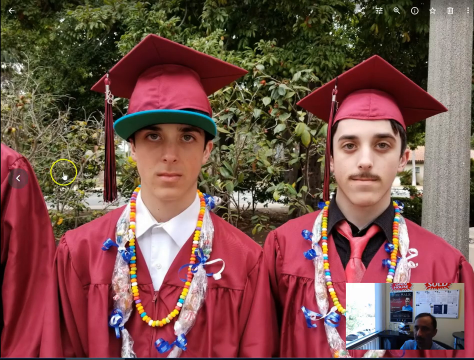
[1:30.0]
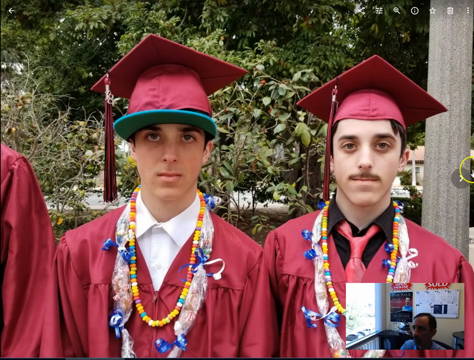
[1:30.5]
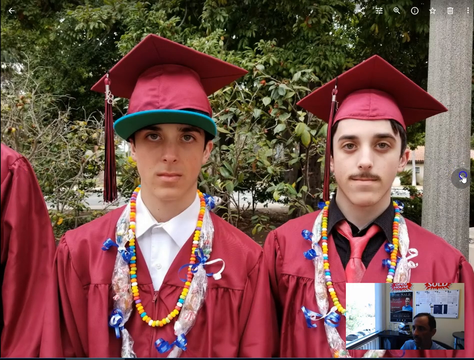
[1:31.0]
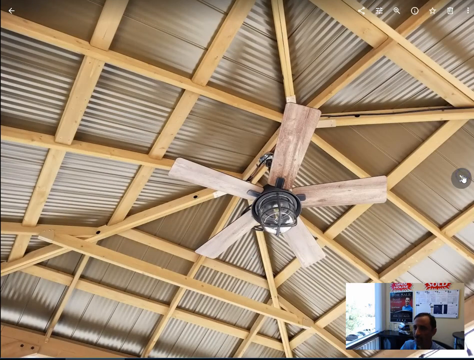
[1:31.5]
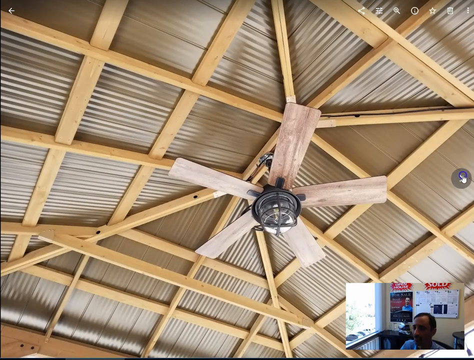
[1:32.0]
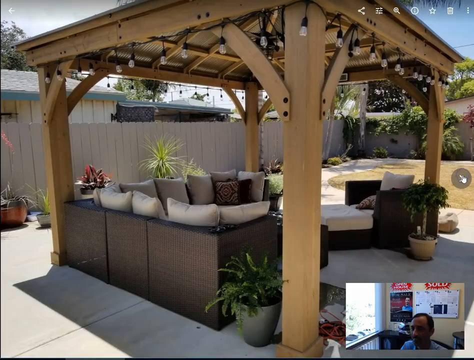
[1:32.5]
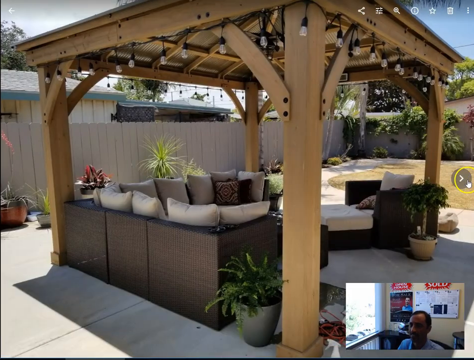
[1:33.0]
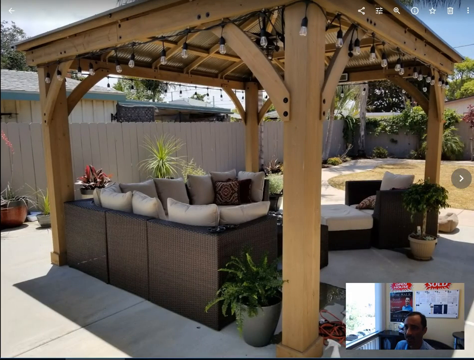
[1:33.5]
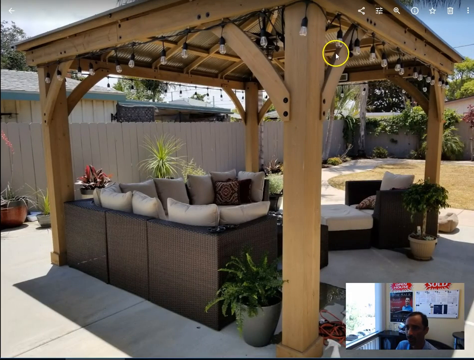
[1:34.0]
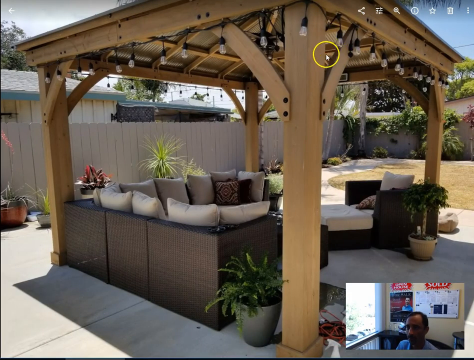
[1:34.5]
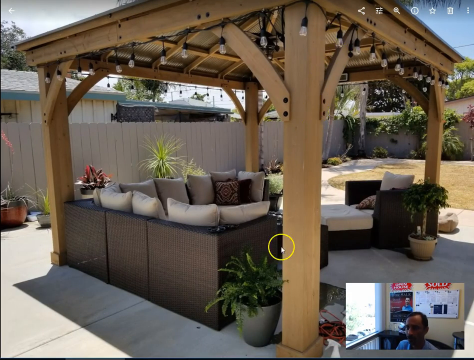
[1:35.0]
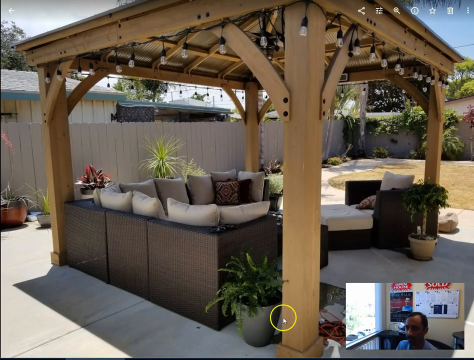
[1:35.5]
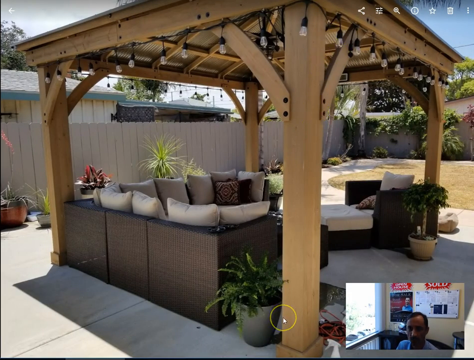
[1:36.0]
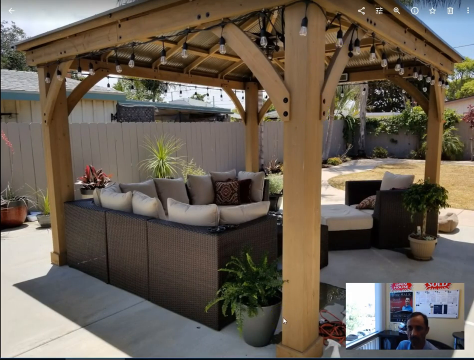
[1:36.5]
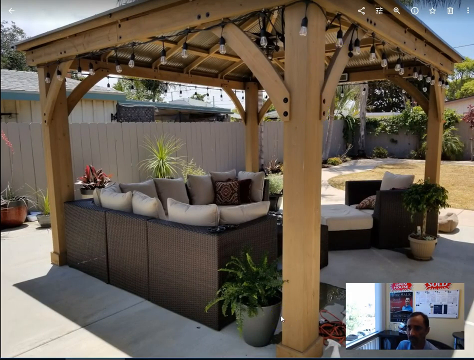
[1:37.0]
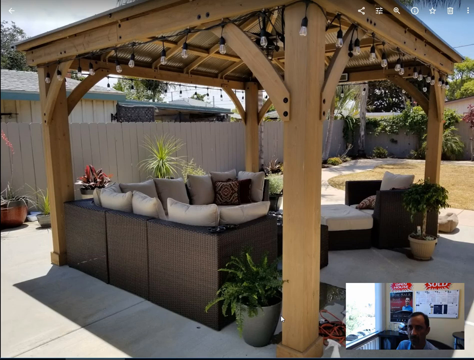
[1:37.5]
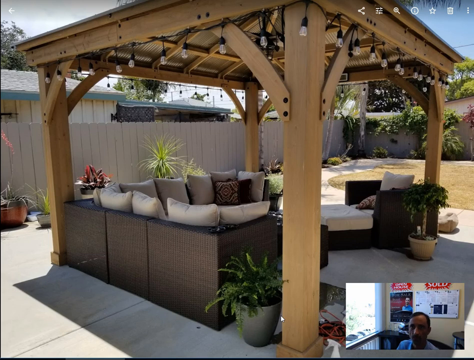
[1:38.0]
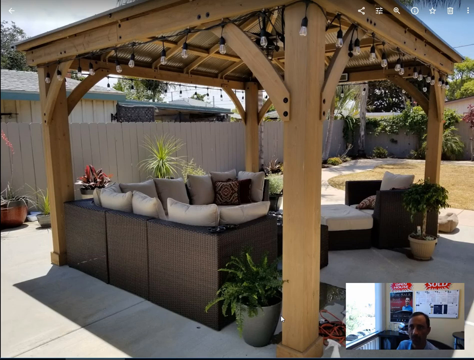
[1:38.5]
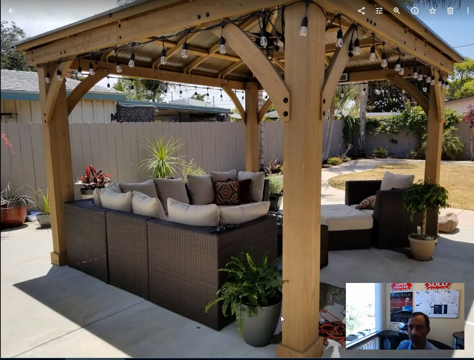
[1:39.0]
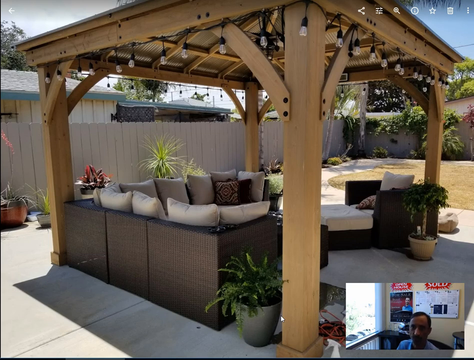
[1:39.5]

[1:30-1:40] A graduation picture shows two men wearing caps and gowns of a burgundy-like color; they are also wearing necklaces. The video cuts to a picture of the ceiling of a gazebo, and the user clicks the right chevron button on the right side of the screen. A side view of the gazebo appears; it seems to be in a backyard. The gazebo is light brown and made of wood, with a bunch of lights around the top. Underneath are outdoor sofas whose frames look like they are made of plastic, in a blackish color, and the backrest pillows look light gray. There are pots on the corners of the gazebo, and a grayish fence is in the background.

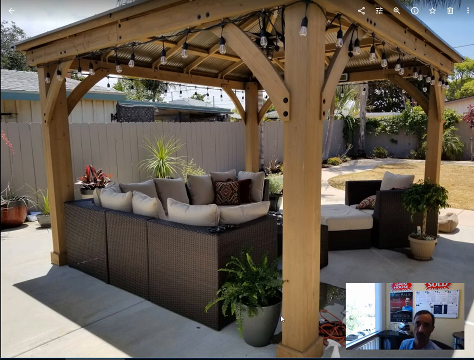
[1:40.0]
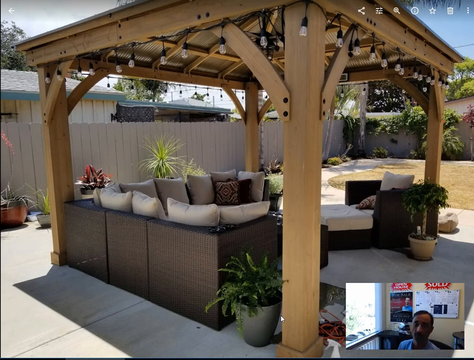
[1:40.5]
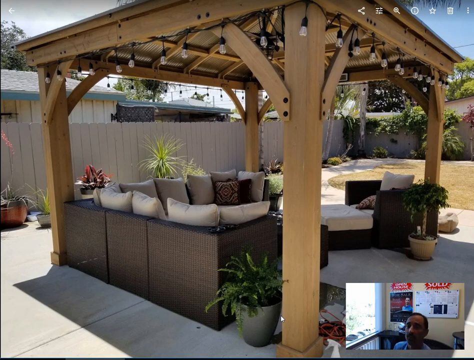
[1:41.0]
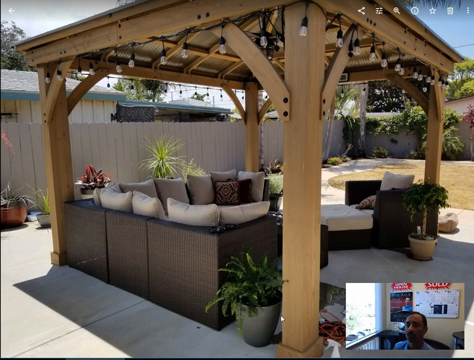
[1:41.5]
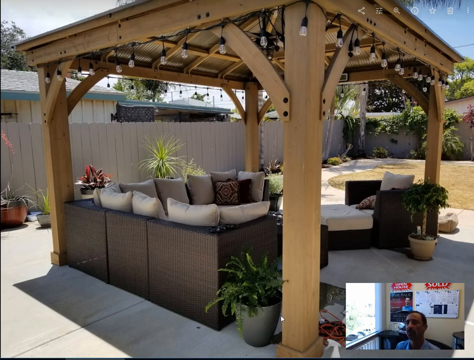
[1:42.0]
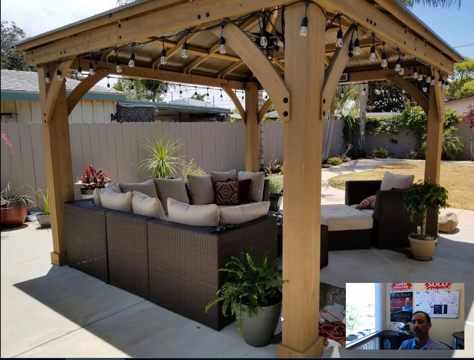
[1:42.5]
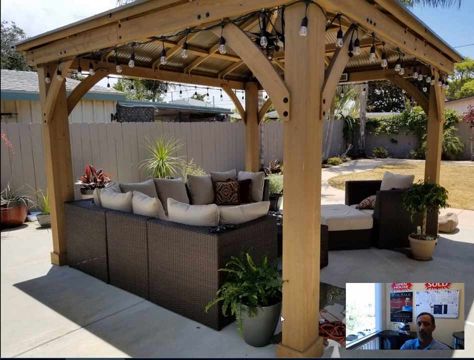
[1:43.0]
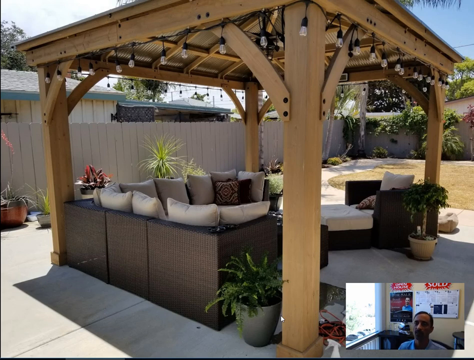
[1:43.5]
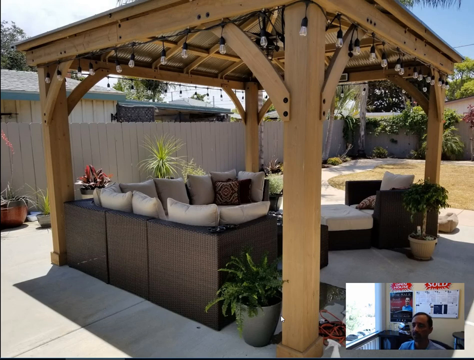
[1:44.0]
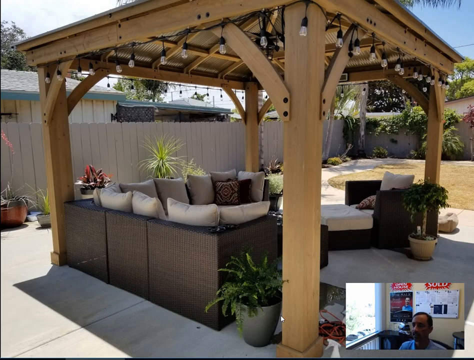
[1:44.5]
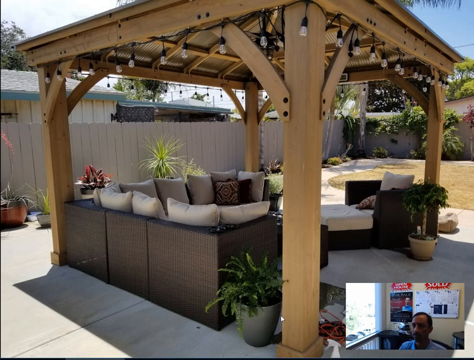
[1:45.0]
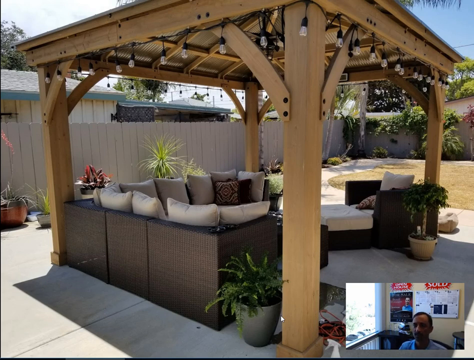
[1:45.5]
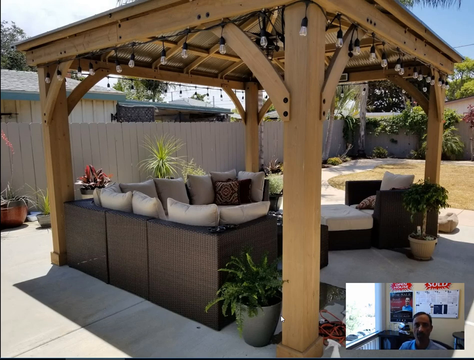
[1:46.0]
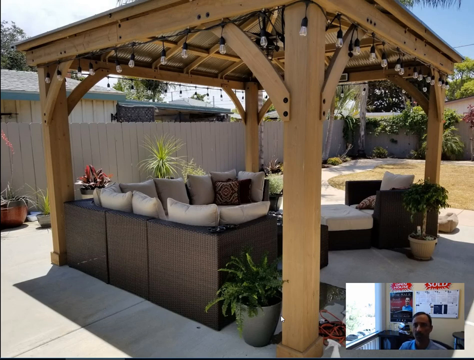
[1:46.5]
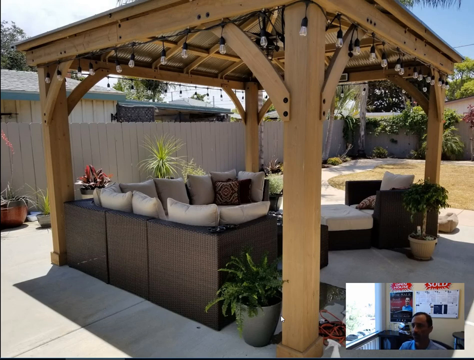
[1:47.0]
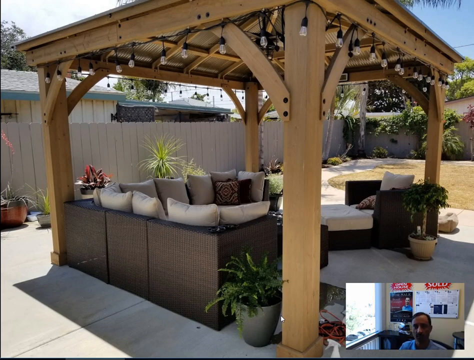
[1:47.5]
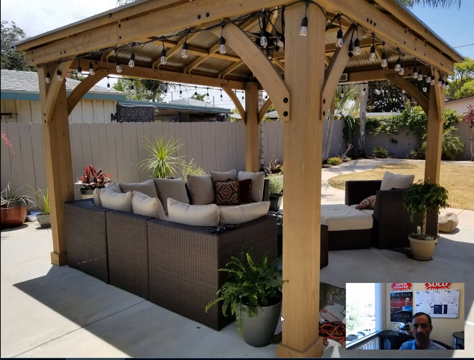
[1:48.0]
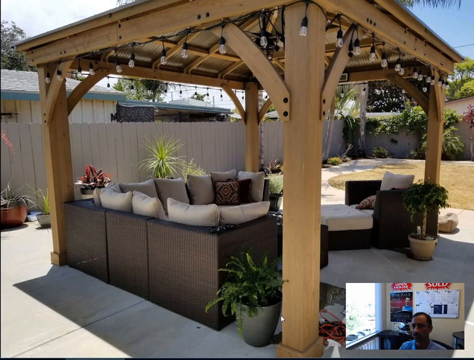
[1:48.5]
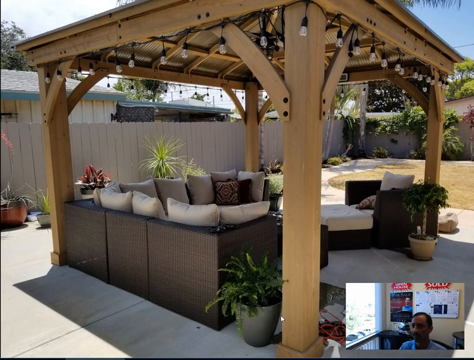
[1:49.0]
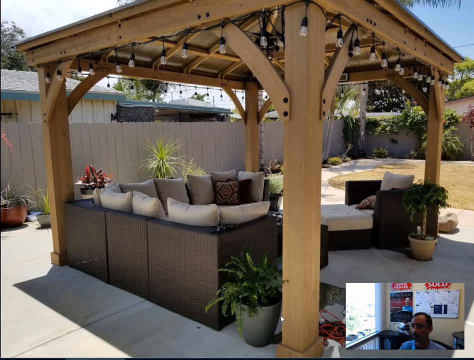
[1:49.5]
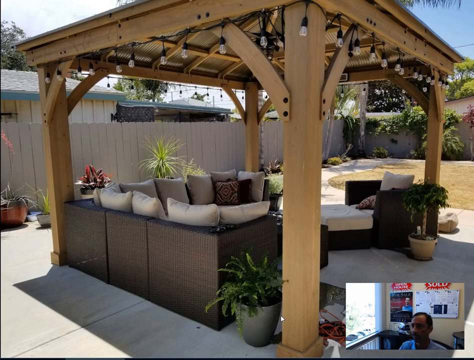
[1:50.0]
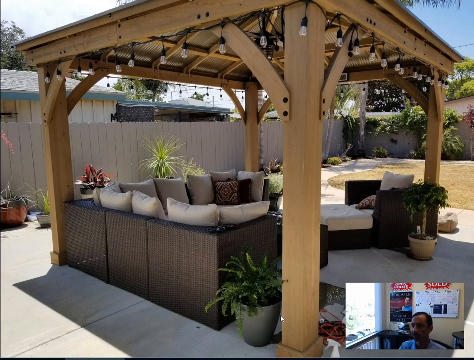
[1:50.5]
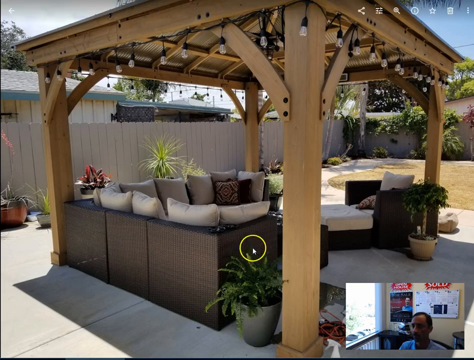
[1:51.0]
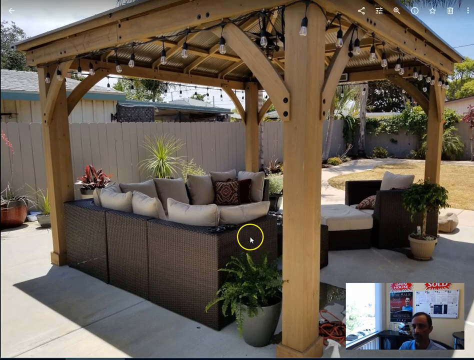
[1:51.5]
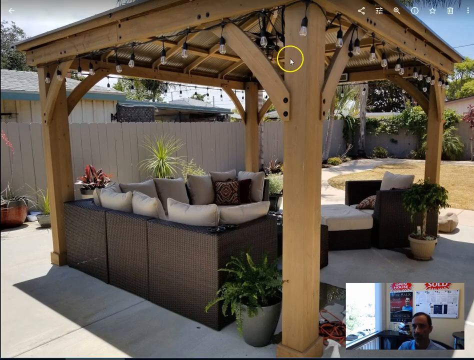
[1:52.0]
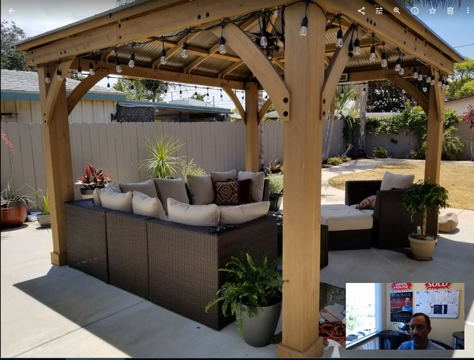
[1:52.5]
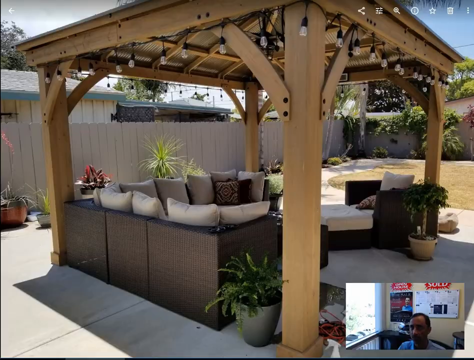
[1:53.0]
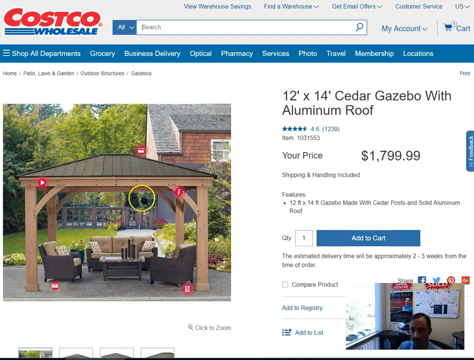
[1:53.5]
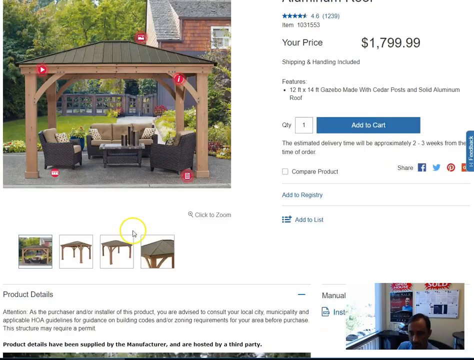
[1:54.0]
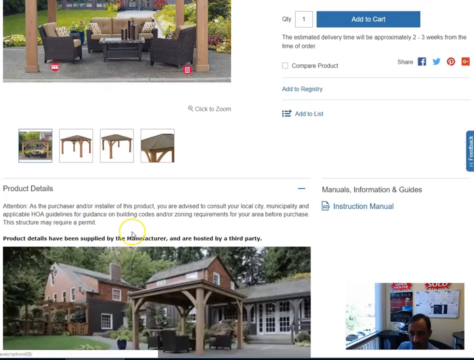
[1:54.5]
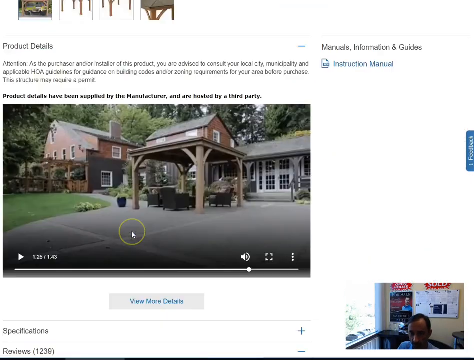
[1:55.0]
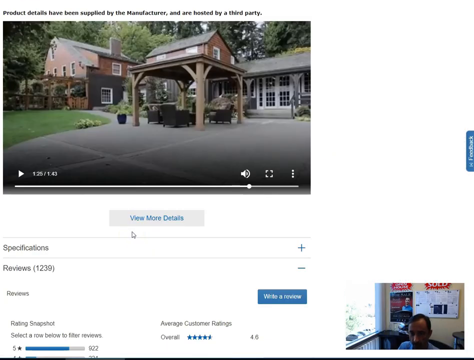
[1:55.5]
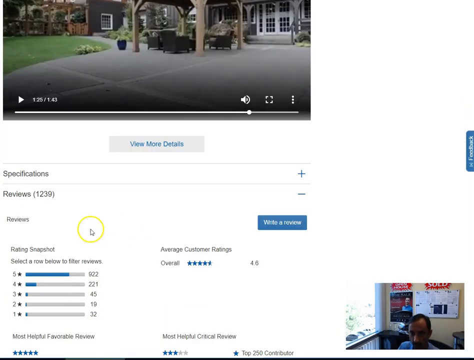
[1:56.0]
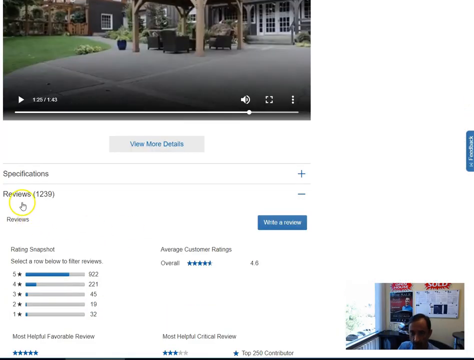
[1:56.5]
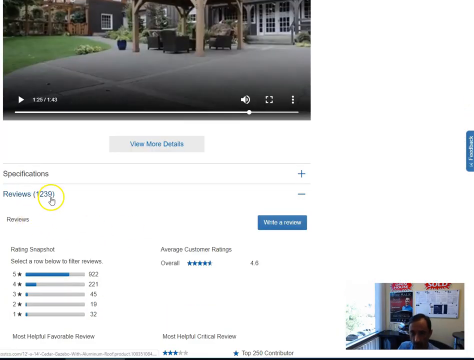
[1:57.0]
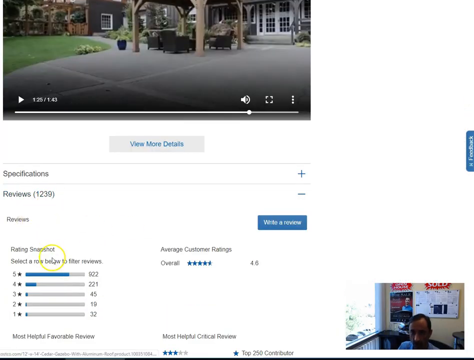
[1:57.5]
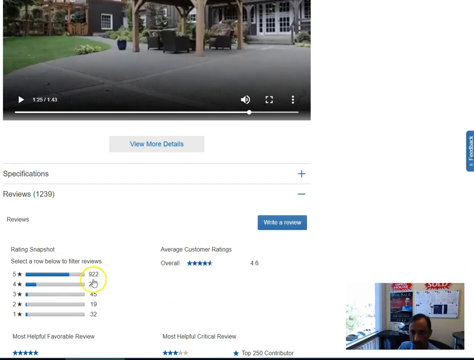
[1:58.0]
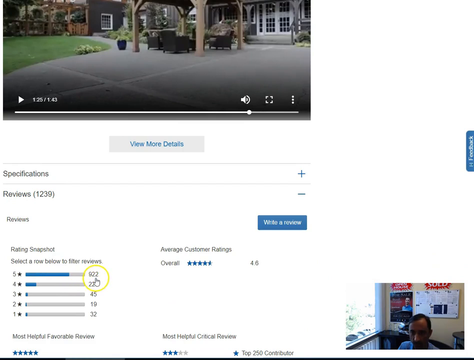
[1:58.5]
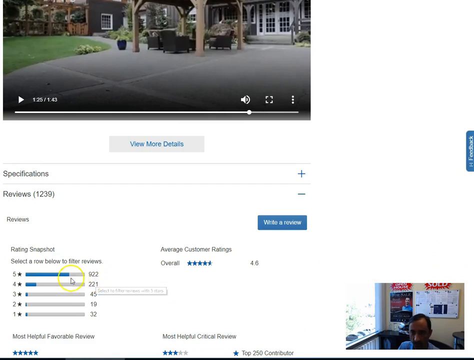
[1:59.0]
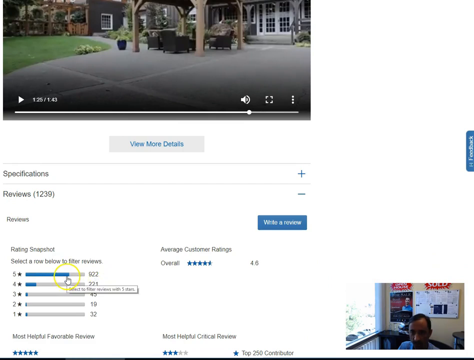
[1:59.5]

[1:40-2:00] A gazebo seems to be made of light brown wood, with a bunch of lights around the top. Underneath it are sofas in a dark brown, grayish color, and the pillows on the backrest are light gray, almost tan. Two pots are on each side of the gazebo's legs. In the lower right is a picture-in-picture video of a person who seems to be describing the gazebo. The gazebo is in a backyard, with a fence, a walkway and a patch of grass. The video then cuts back to the Costco website, showing the gazebo from a different angle and the specifications on the right side.